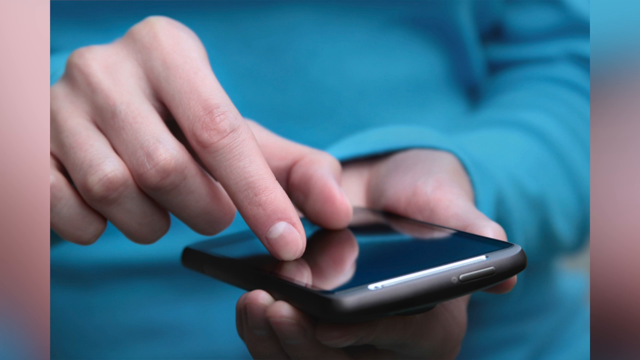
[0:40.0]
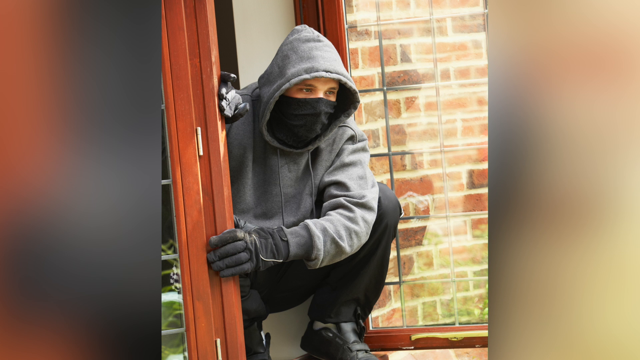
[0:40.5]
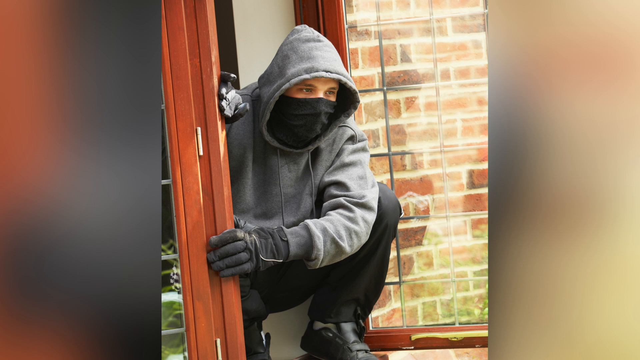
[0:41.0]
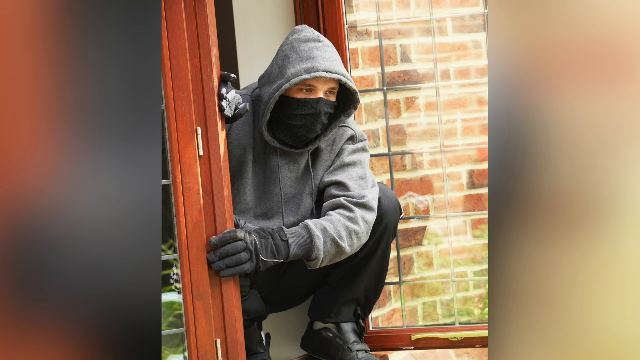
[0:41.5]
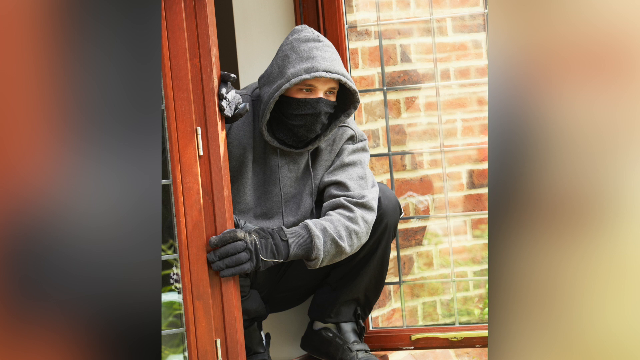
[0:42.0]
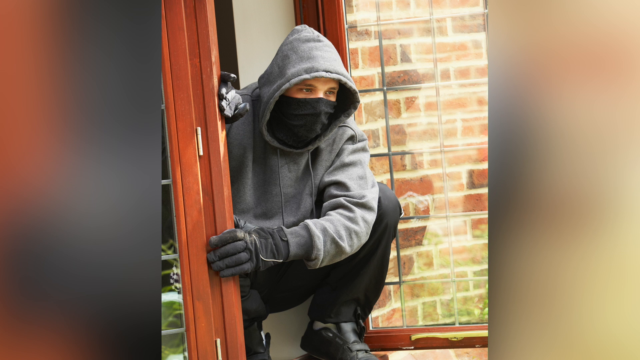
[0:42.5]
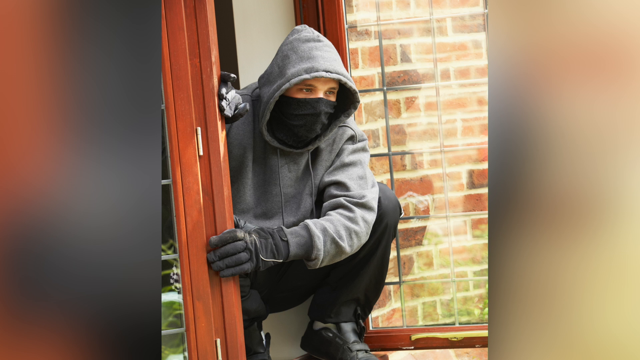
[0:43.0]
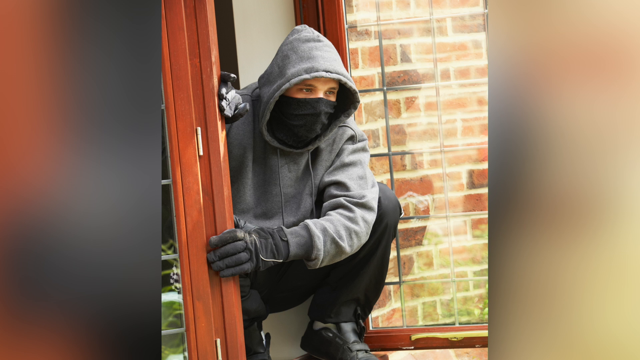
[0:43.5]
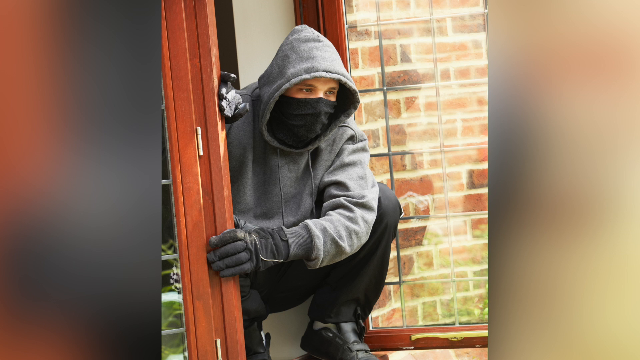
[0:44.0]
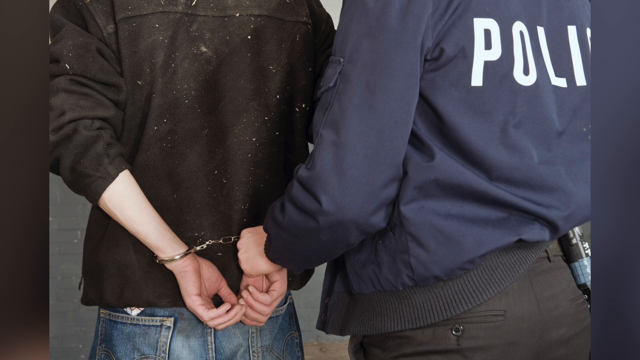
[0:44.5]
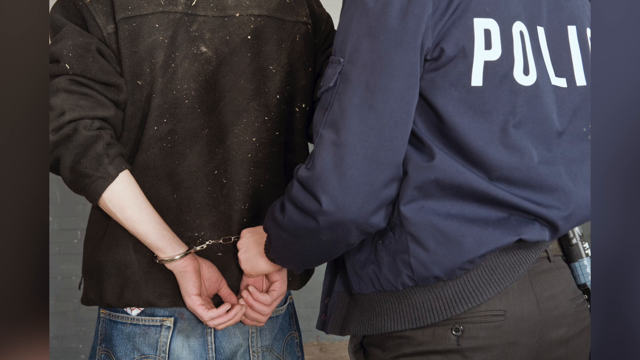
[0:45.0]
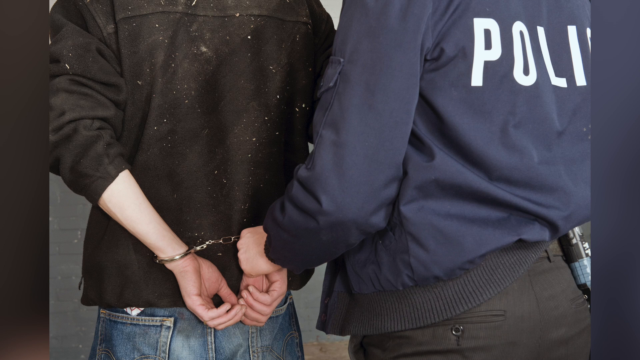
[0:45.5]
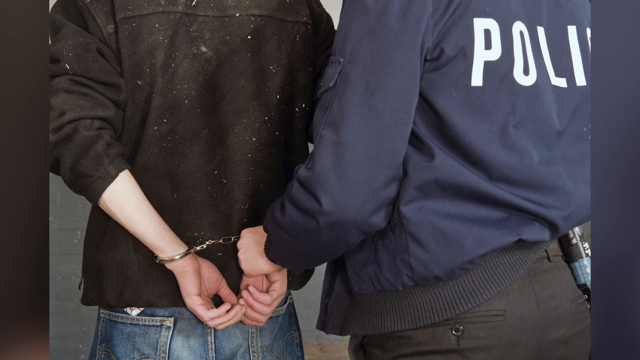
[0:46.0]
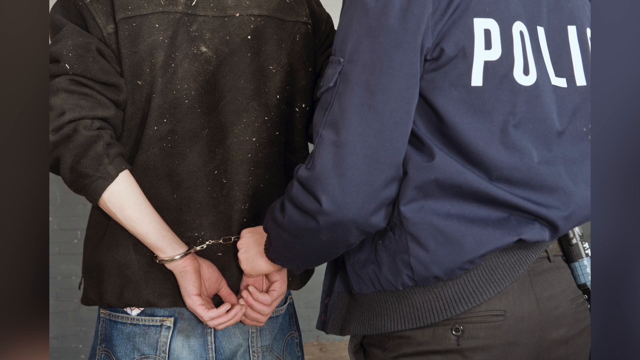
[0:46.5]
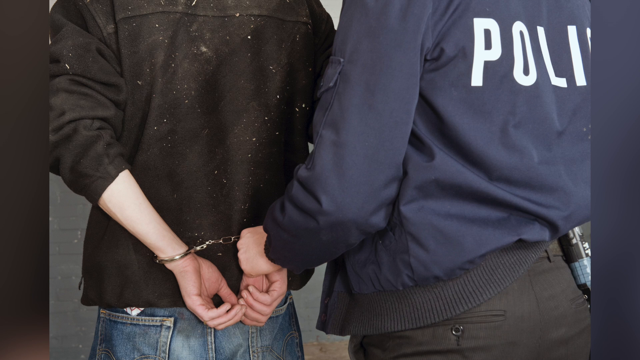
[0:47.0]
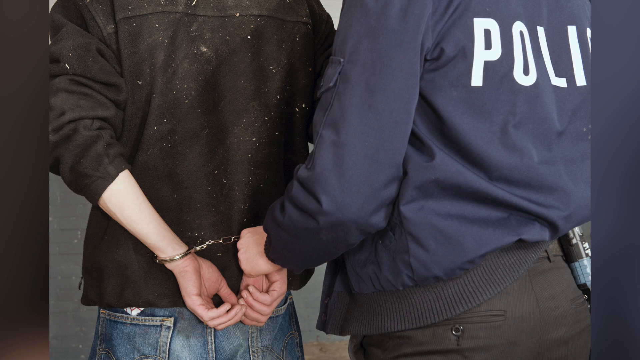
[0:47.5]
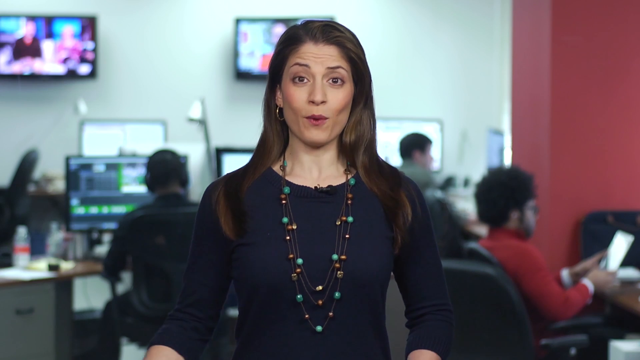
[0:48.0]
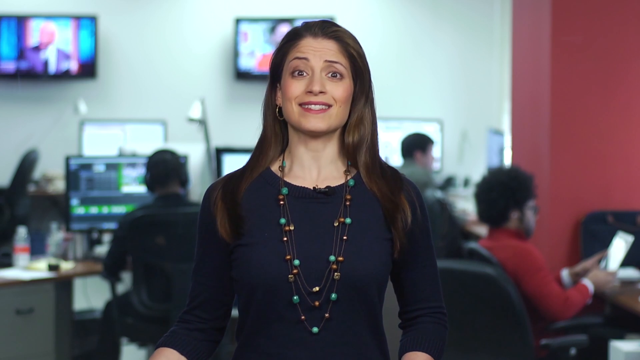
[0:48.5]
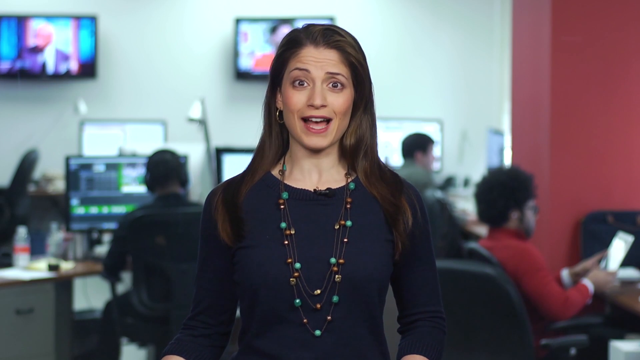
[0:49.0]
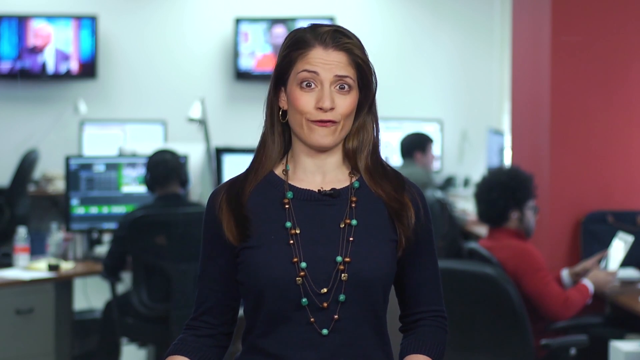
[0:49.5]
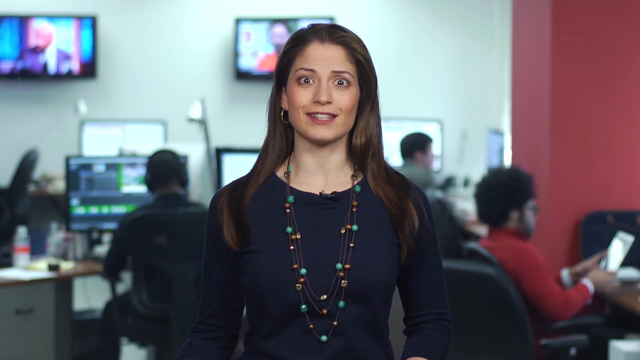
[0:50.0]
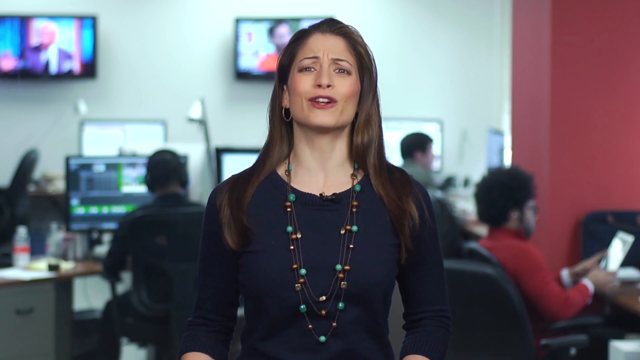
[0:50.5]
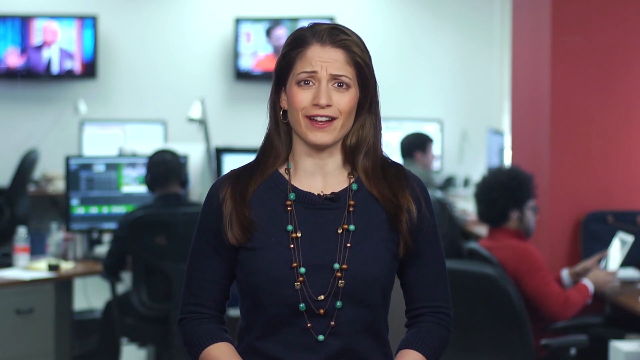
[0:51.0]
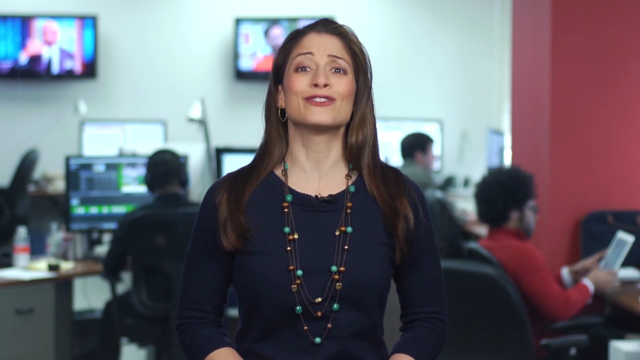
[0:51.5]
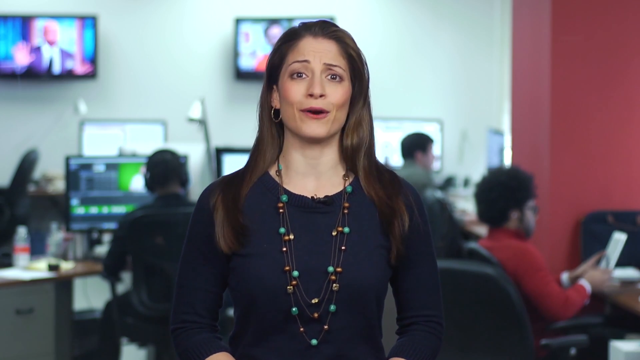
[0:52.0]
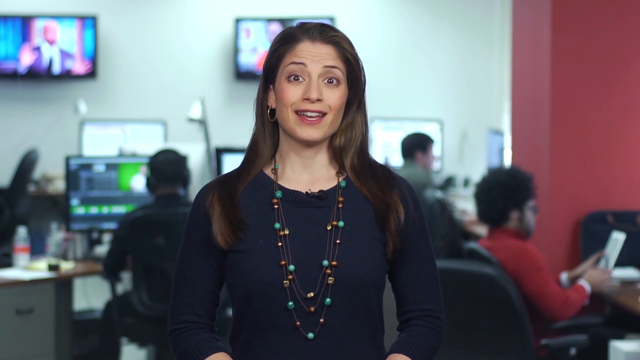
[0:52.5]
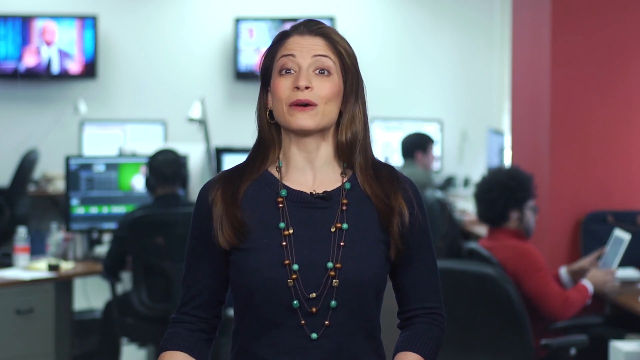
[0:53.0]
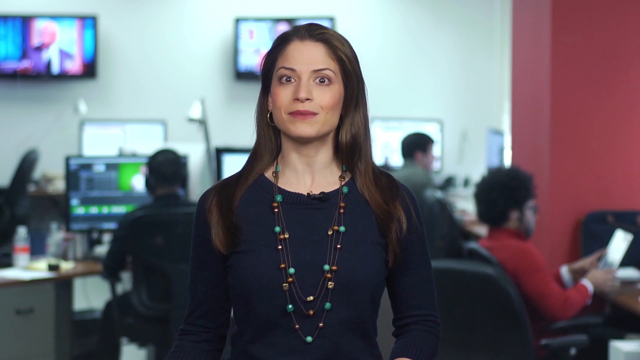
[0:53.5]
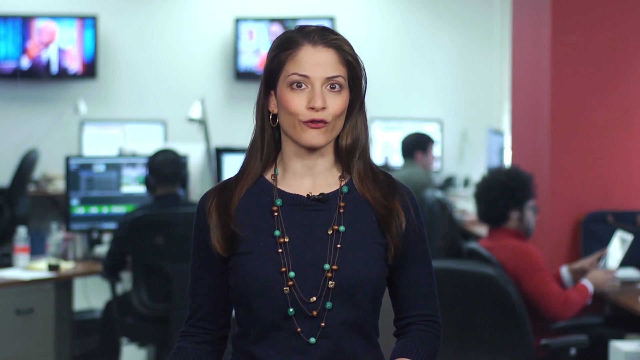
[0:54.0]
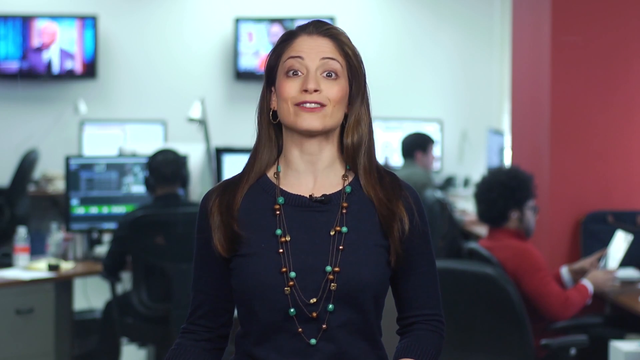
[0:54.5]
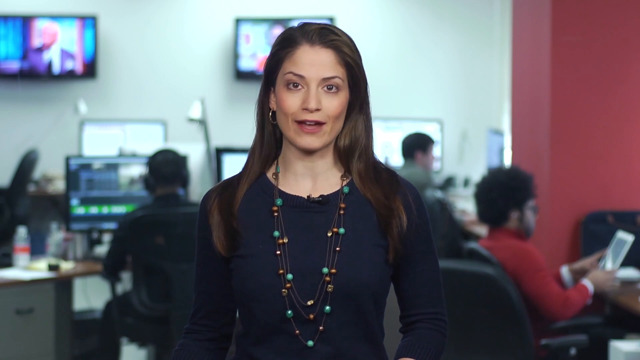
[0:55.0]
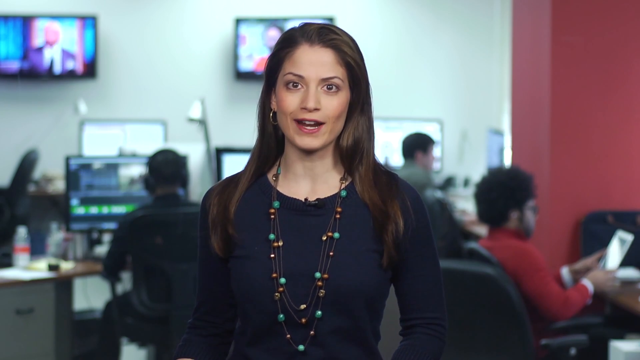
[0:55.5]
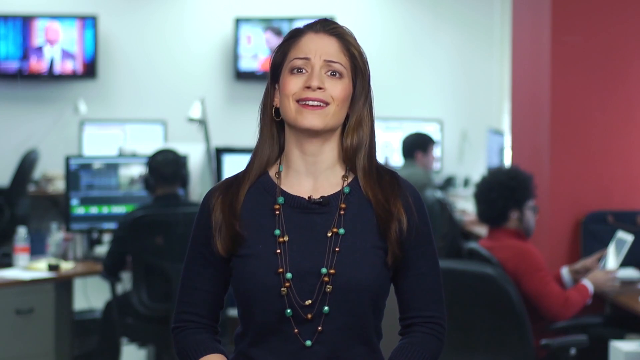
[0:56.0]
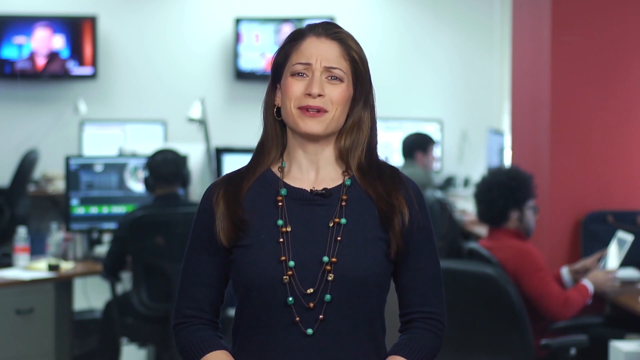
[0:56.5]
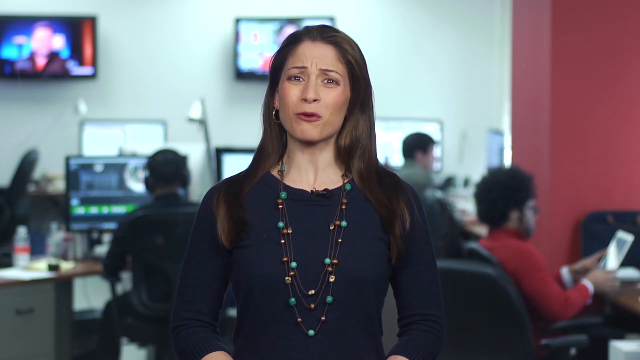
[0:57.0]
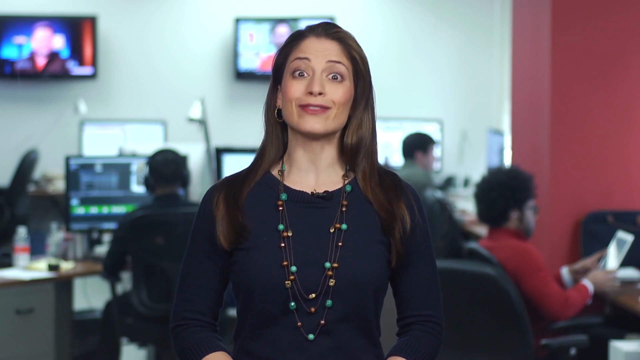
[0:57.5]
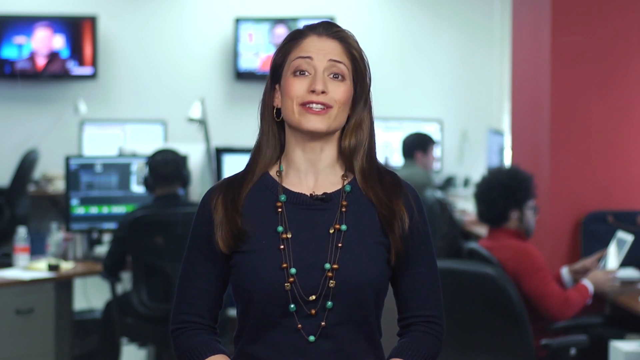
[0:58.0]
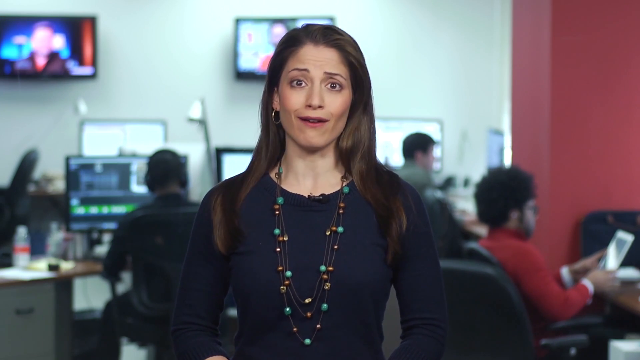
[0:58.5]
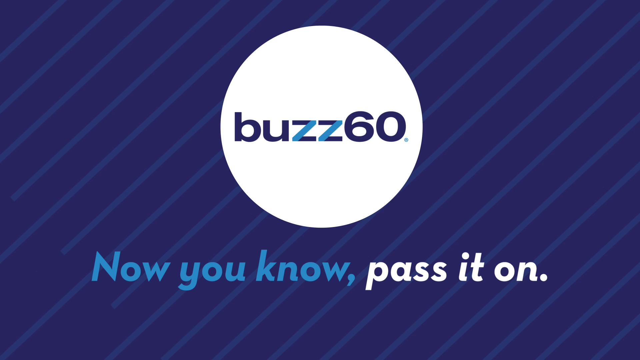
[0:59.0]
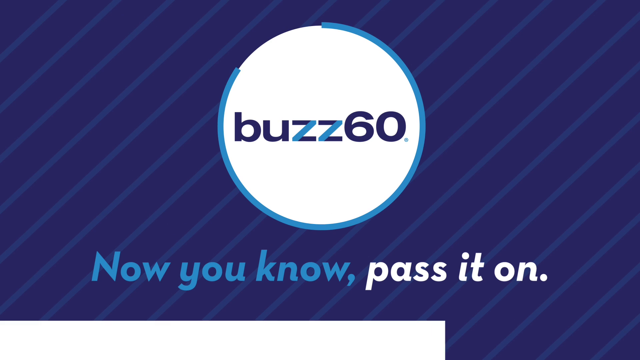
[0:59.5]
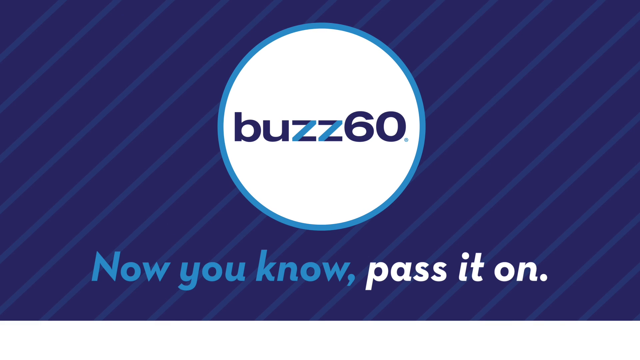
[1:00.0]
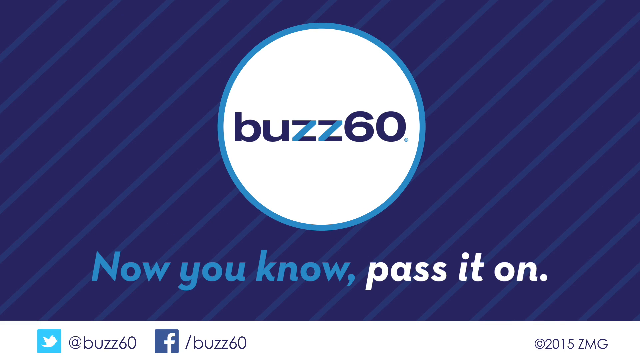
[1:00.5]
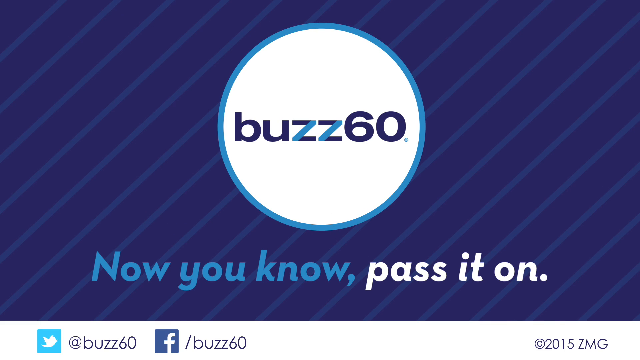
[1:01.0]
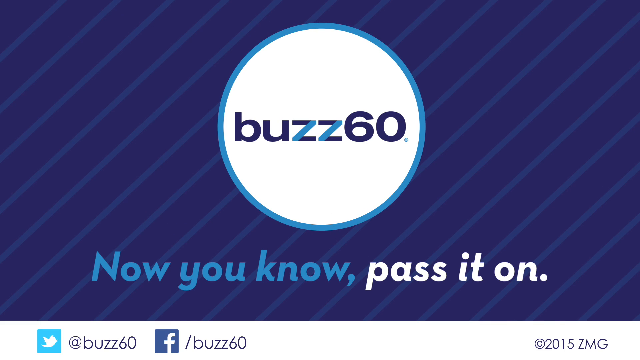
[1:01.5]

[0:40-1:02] A picture shows a person with hands on a phone, dialing a number. Then a picture shows a man covering his face, dressed in grey, trying to escape through a window. The setting changes back to the studio, where the reporter describes the series of events and looks focused. Then a man is escorted by police with his hands handcuffed; only the backs of the police and the man are visible as they walk.